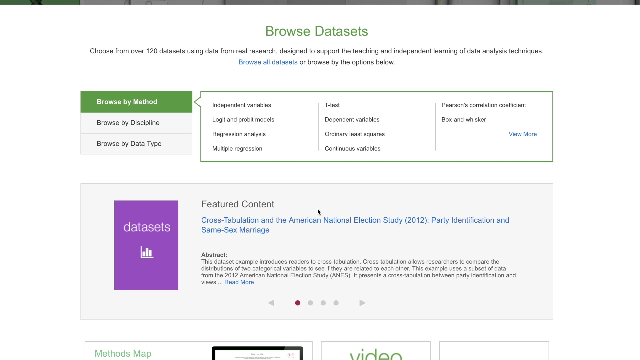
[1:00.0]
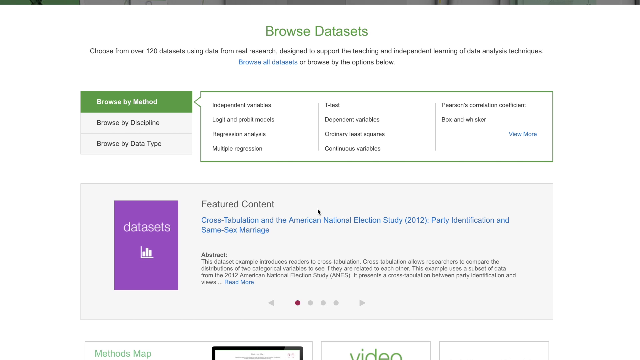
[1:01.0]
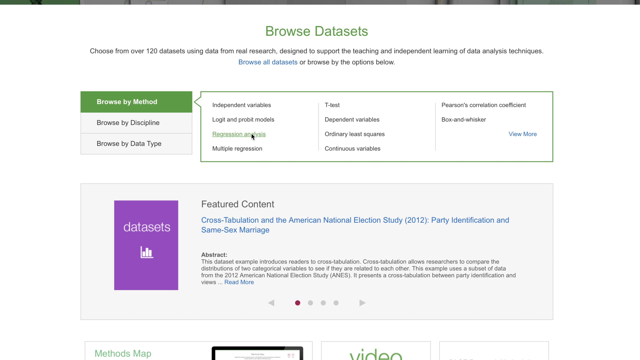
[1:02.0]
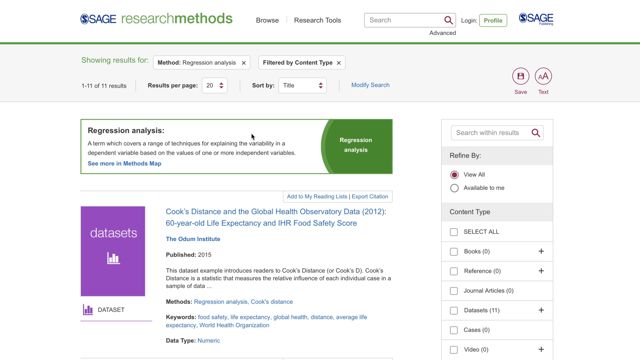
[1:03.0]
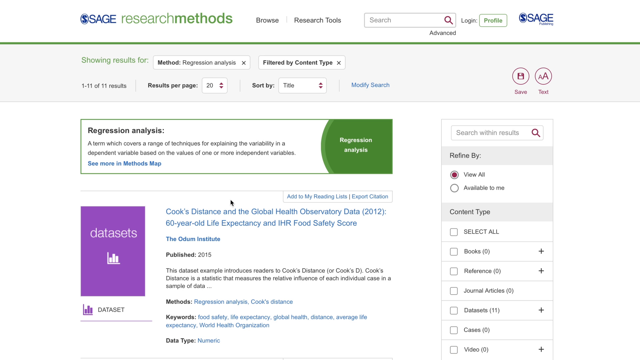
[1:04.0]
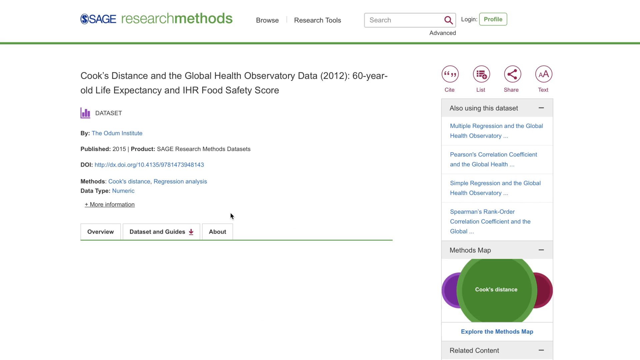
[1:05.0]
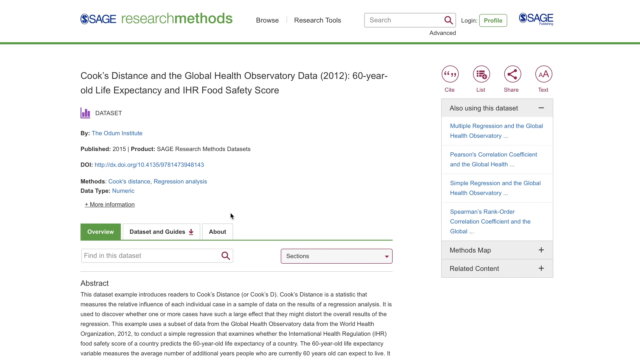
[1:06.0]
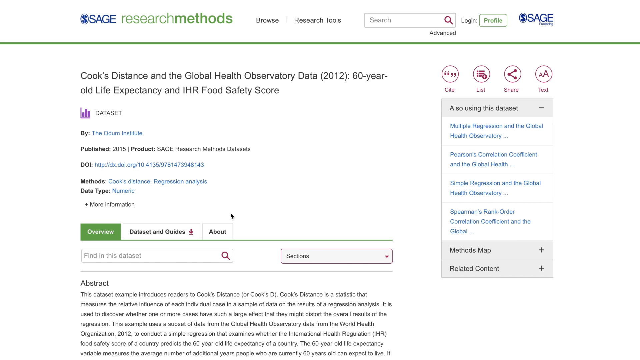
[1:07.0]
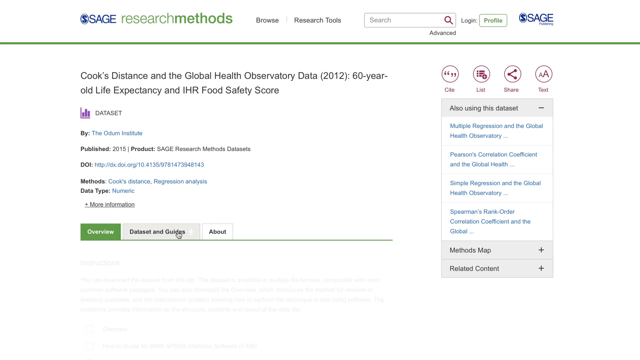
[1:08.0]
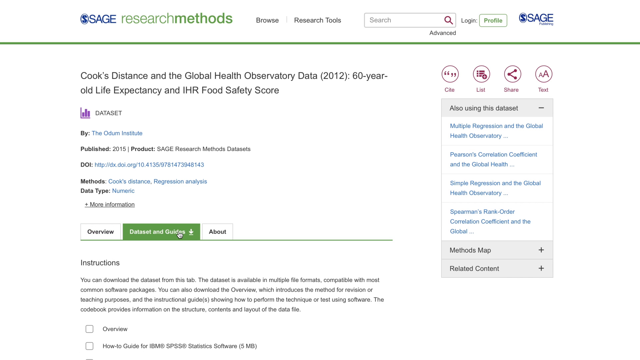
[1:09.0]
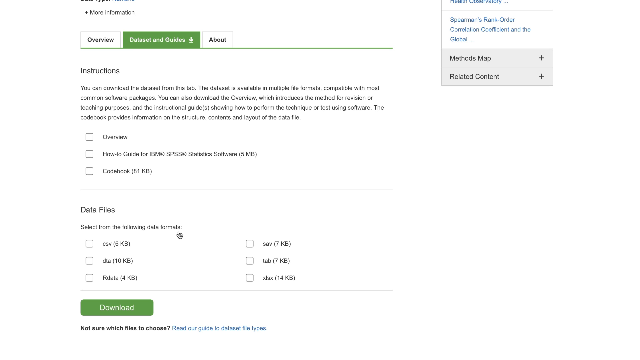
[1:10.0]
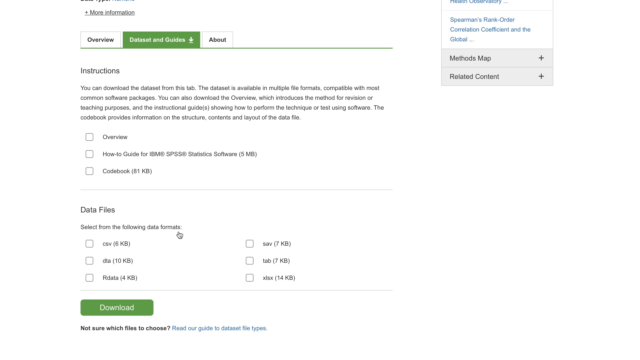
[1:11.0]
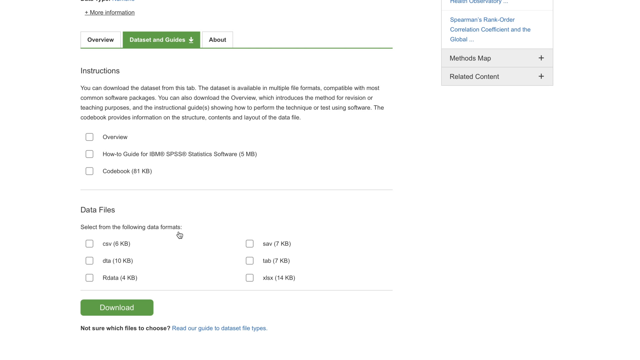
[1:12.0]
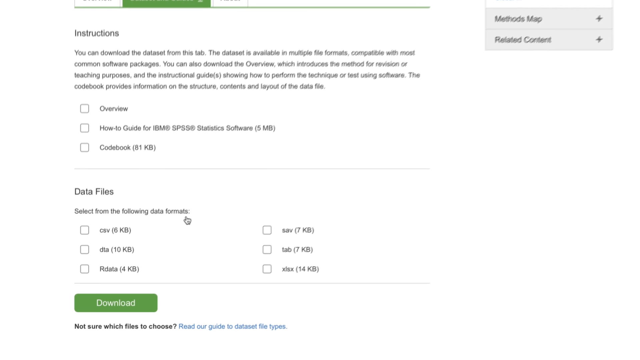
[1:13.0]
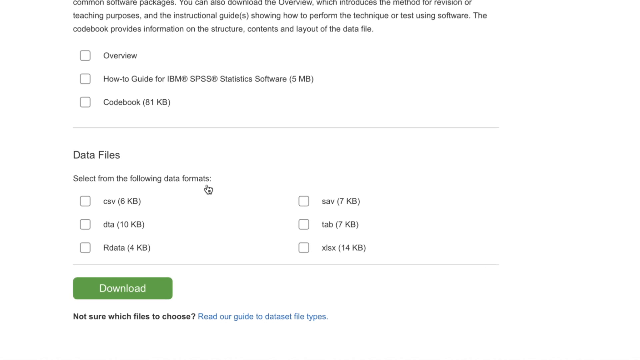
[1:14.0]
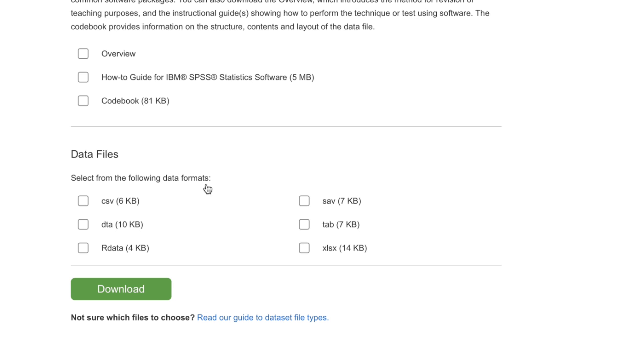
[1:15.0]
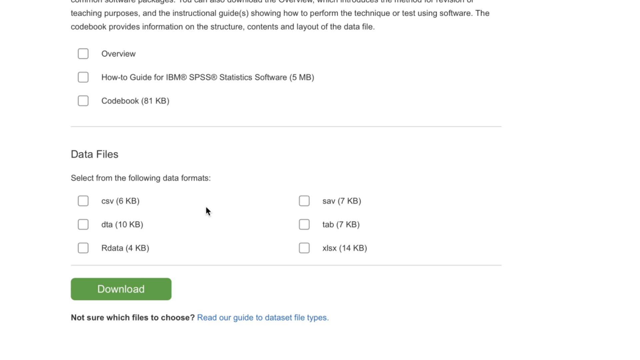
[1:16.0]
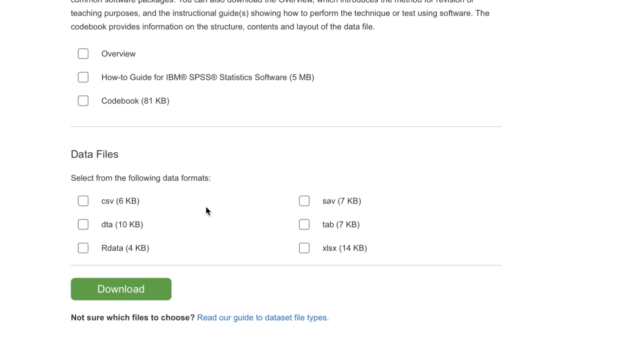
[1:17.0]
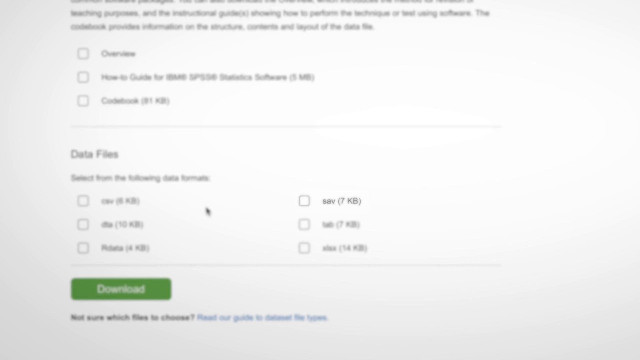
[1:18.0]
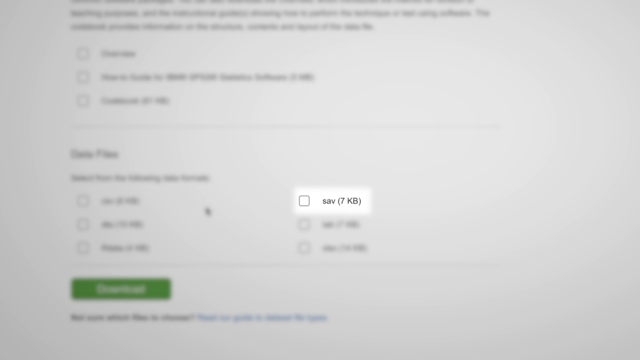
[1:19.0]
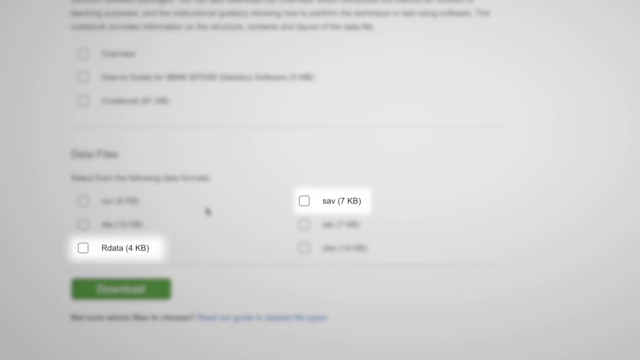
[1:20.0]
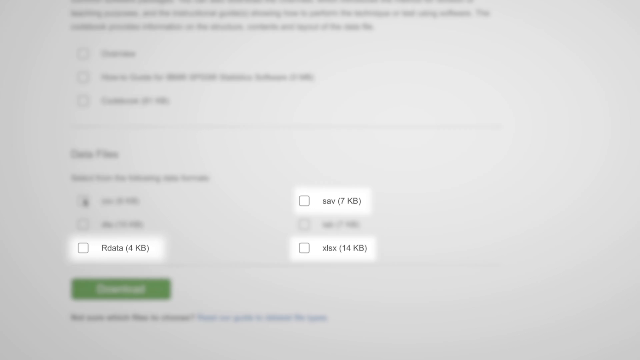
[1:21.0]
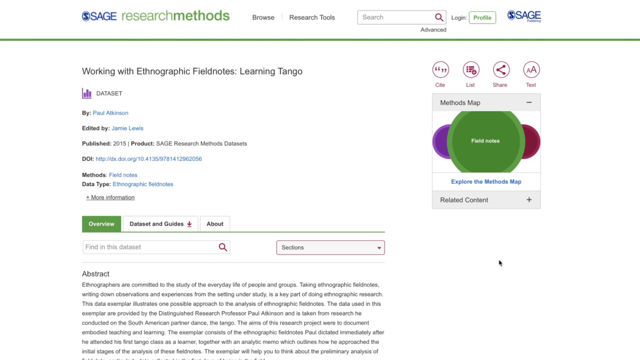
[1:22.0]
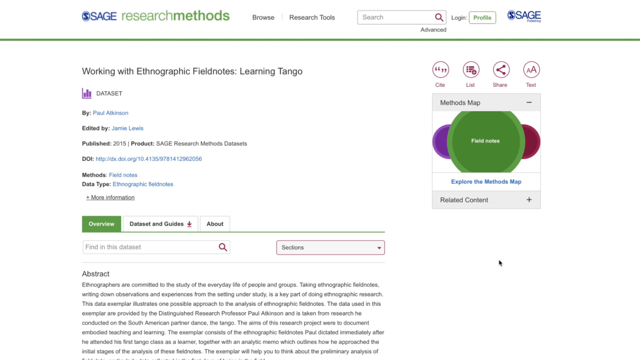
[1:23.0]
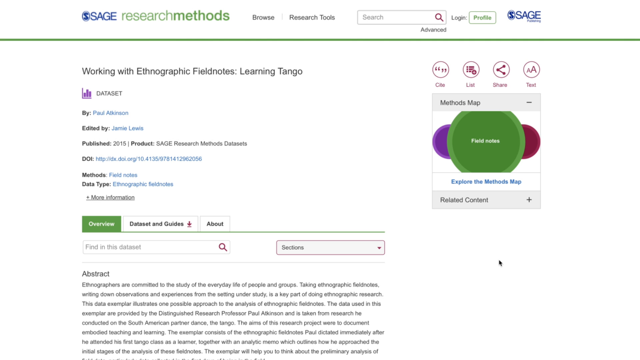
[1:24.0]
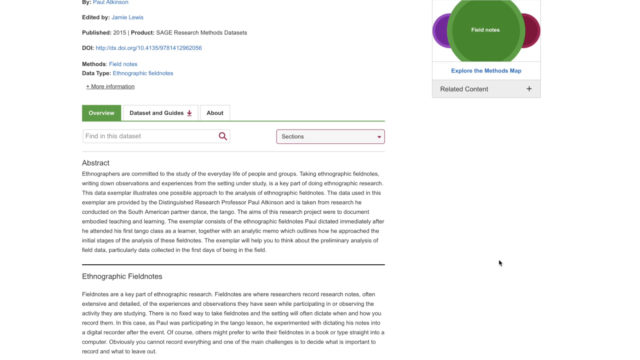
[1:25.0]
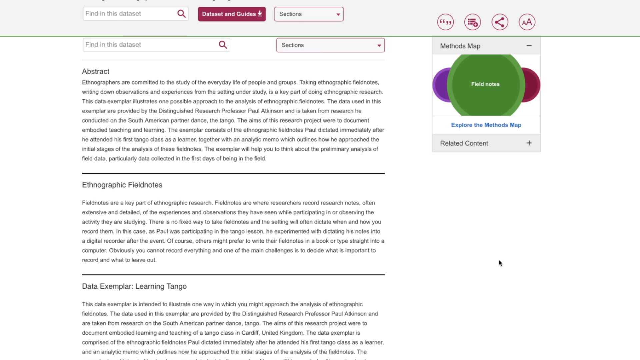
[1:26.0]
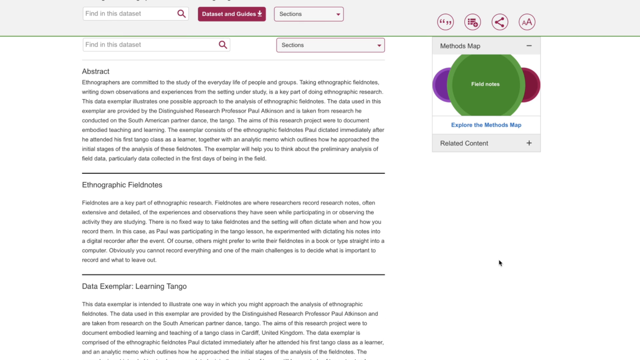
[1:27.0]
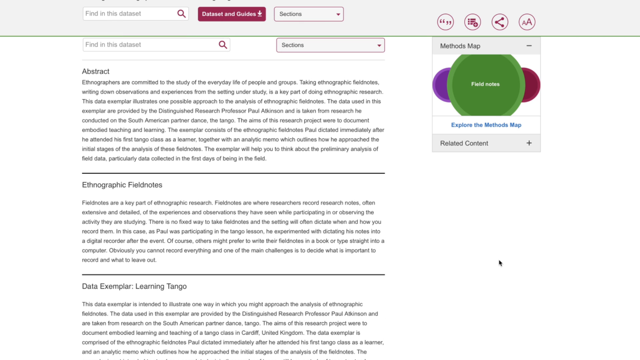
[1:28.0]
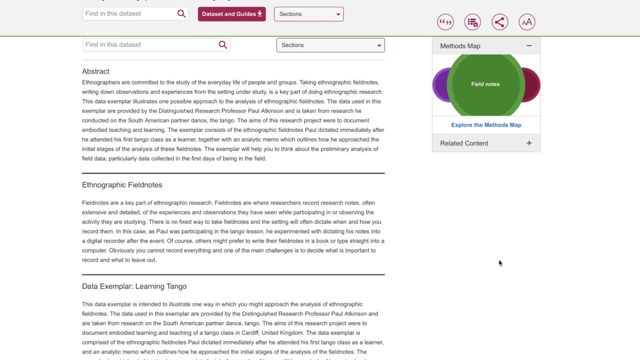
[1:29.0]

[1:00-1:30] The website displays its features, with green and purple colors and writing in black, and a database that can be browsed.